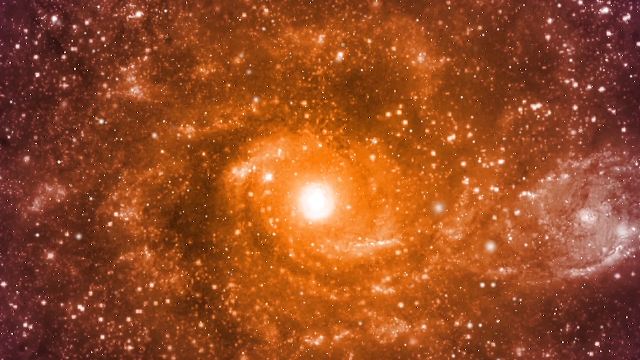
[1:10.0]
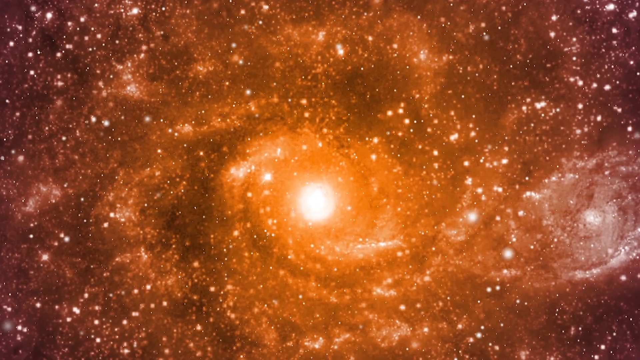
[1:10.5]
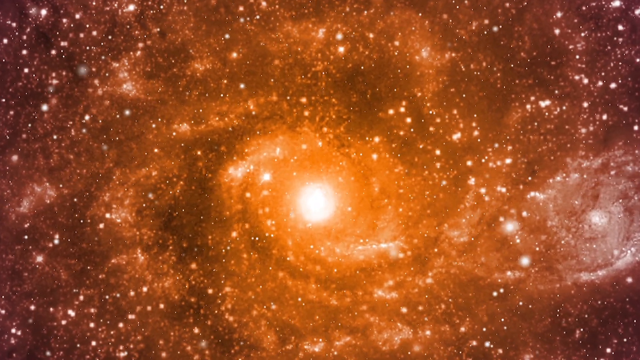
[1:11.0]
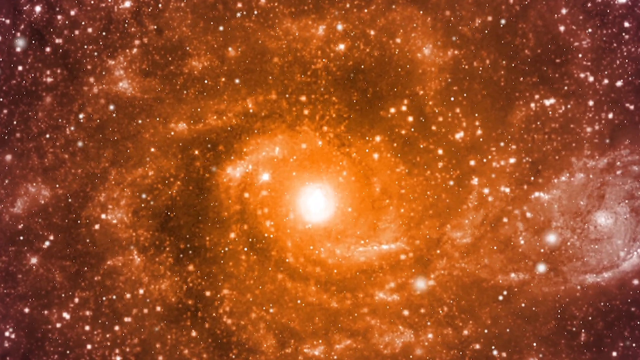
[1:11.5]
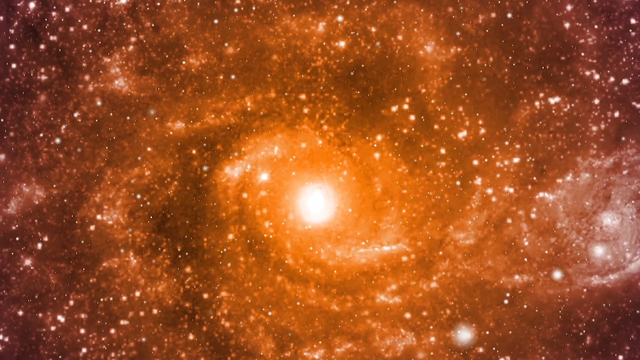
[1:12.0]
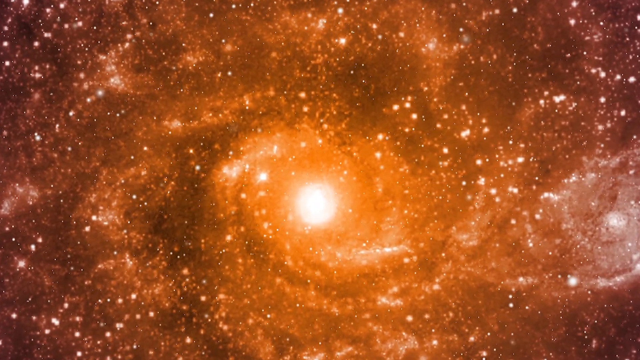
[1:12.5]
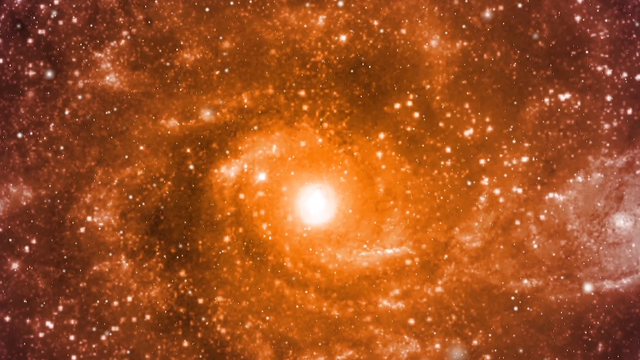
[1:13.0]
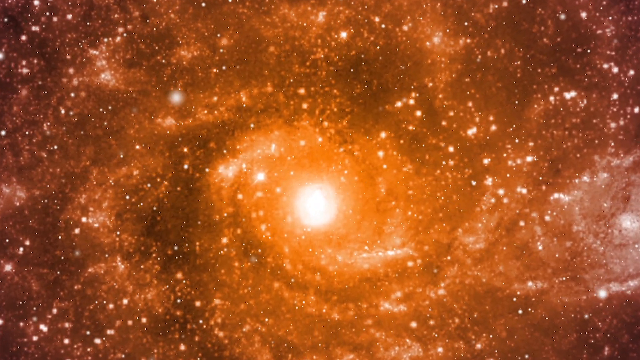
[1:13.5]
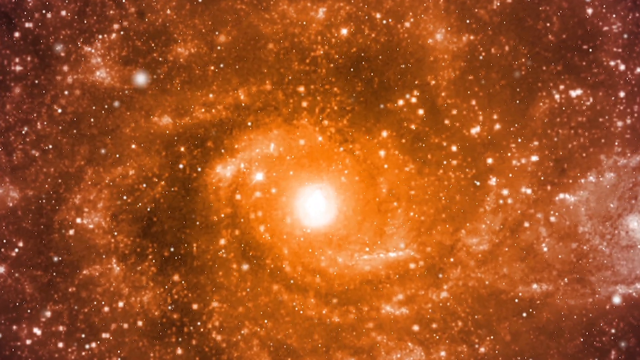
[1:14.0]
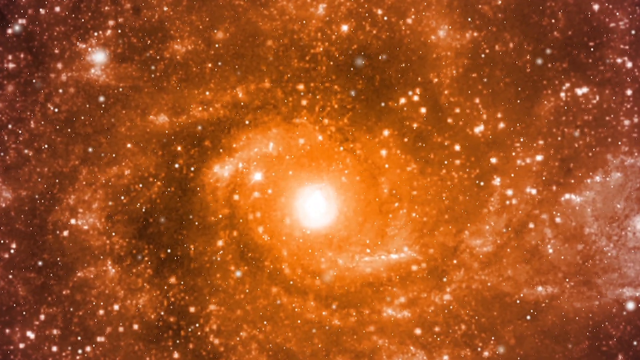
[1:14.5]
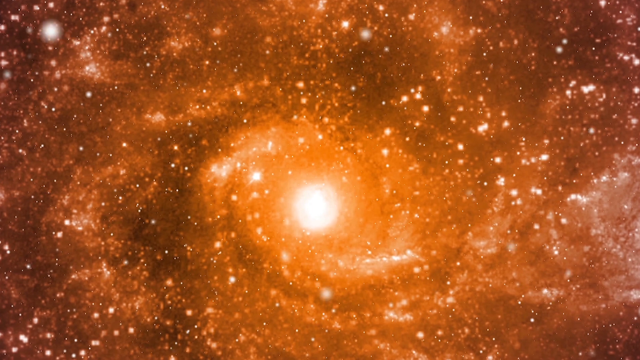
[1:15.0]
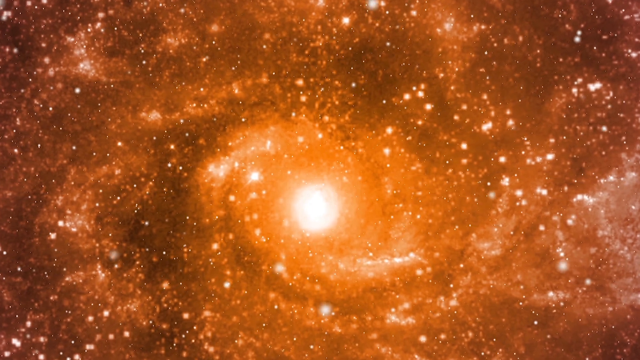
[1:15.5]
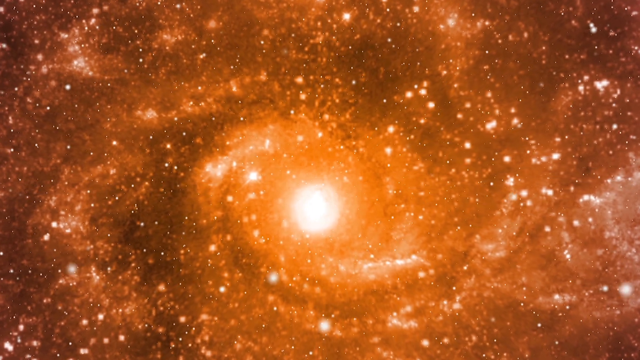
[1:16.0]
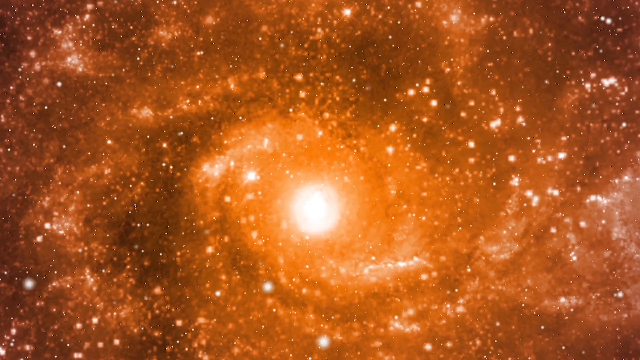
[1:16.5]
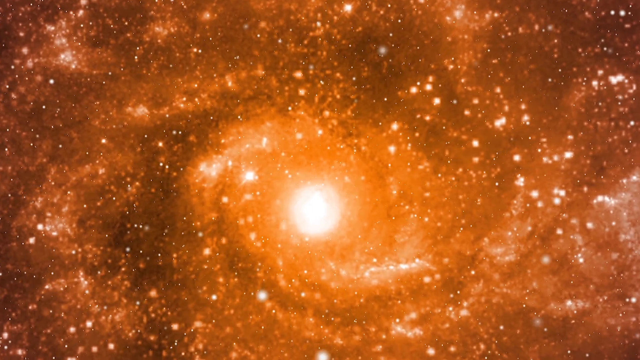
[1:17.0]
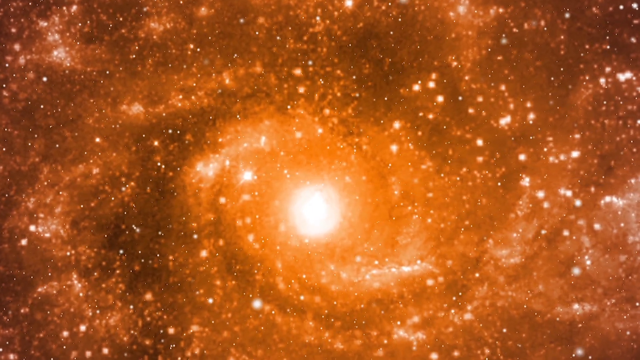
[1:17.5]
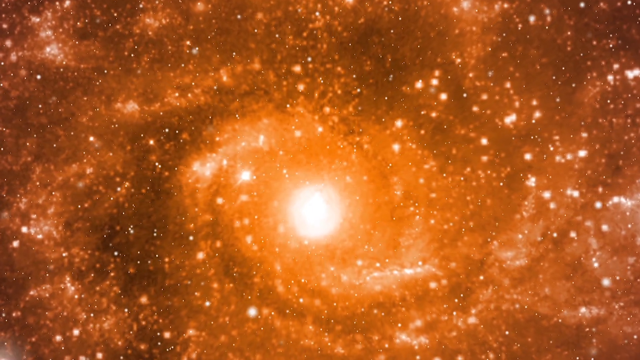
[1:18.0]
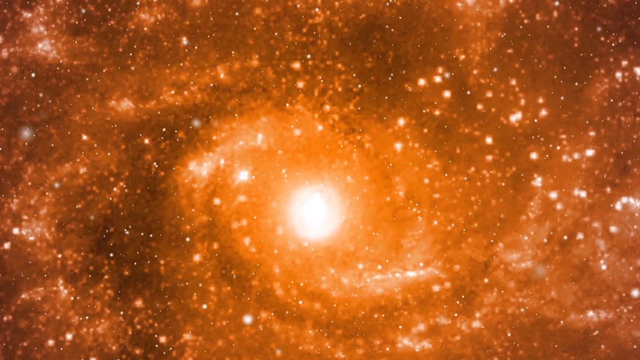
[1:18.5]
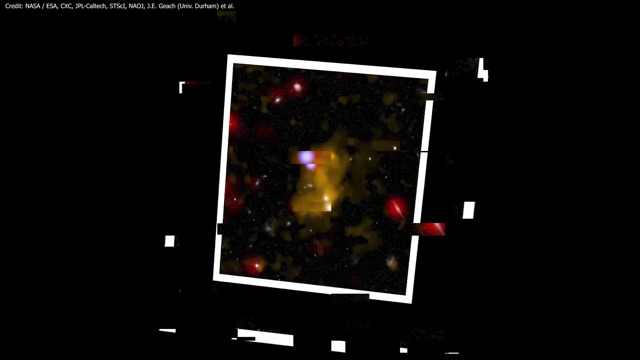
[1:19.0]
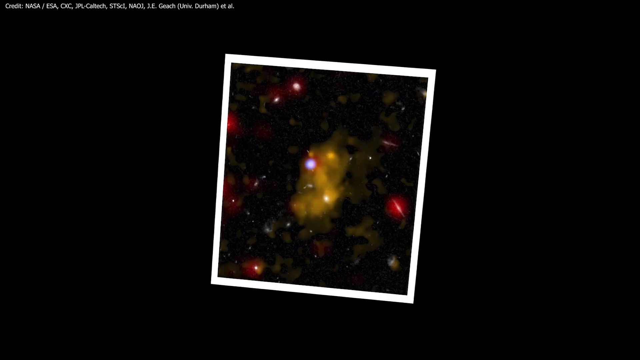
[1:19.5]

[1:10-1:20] The view flies through an orange field of space, with mostly white stars flying across the visual field, toward a white dot in the middle. Suddenly the screen changes to what looks like a polaroid picture framed around another picture of what could be a universe or a galaxy. This one is mainly black with specks of red and purple, and in the middle is a large yellow gaseous body, kind of a tiger's stone yellow. Around it are blotches of a lighter yellow, and farther away, toward the edges of the frame within the picture, are red circles that could be planets. Beyond the edges of the frame is a large black abyss, so the photograph is sort of floating in space.